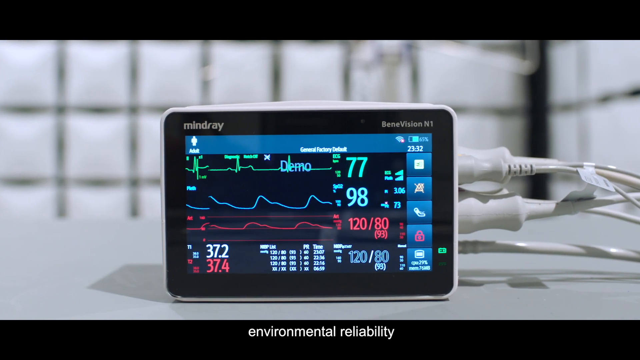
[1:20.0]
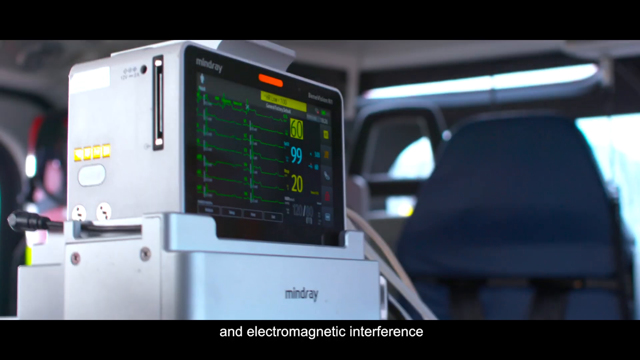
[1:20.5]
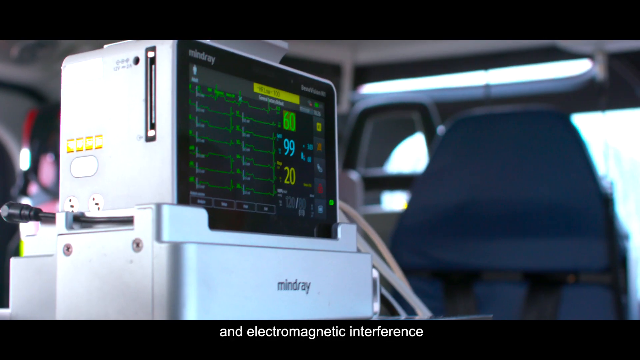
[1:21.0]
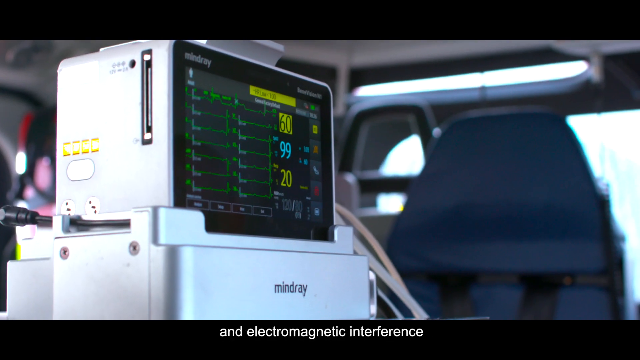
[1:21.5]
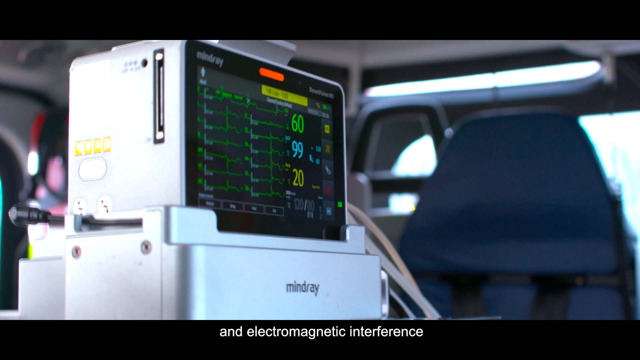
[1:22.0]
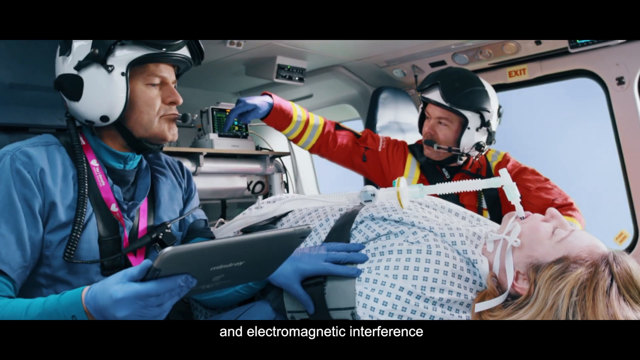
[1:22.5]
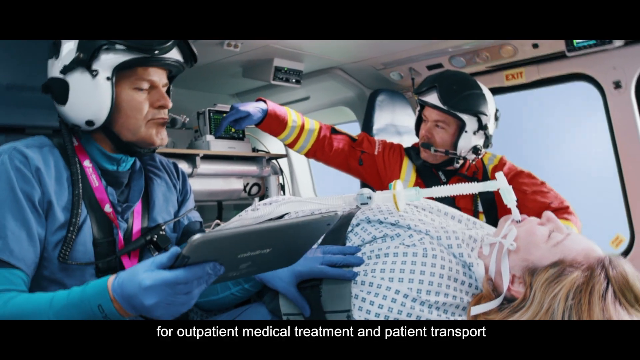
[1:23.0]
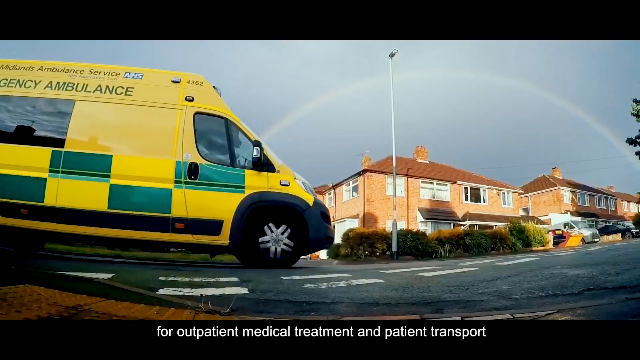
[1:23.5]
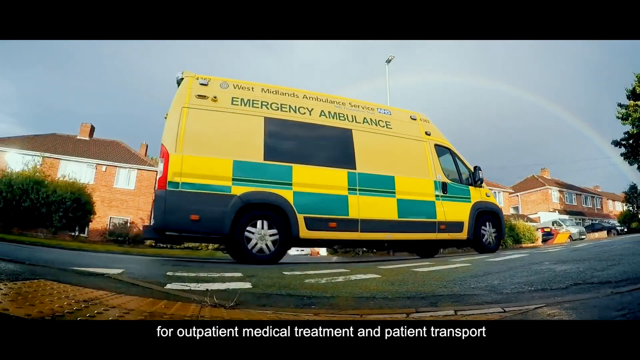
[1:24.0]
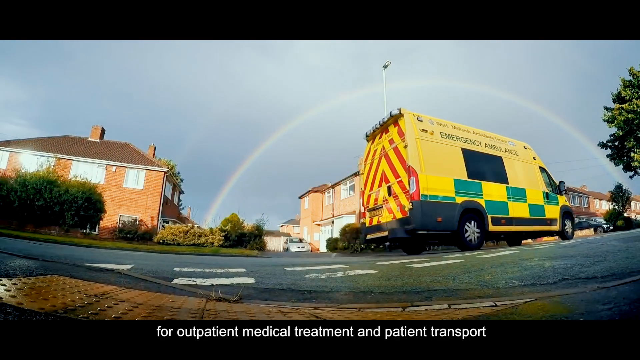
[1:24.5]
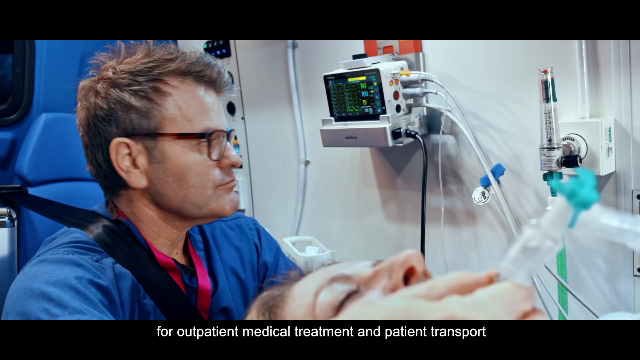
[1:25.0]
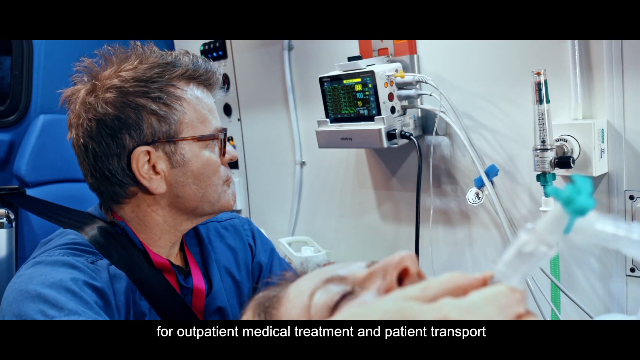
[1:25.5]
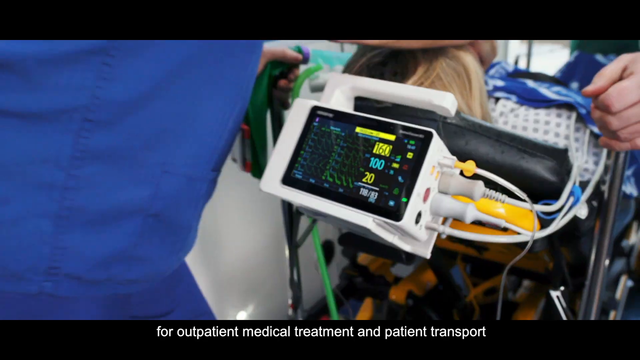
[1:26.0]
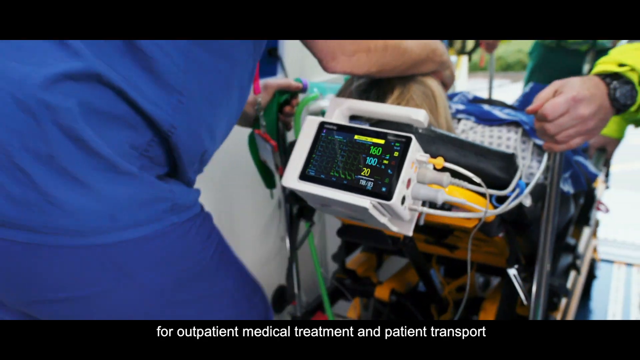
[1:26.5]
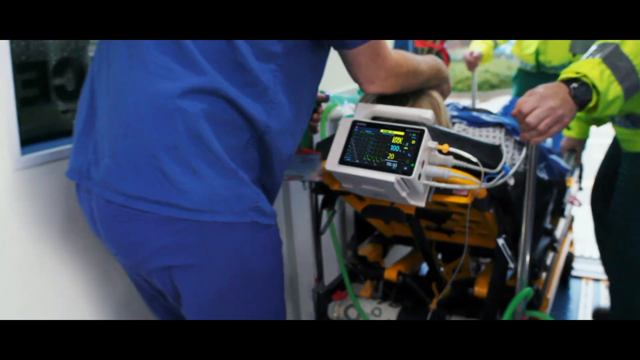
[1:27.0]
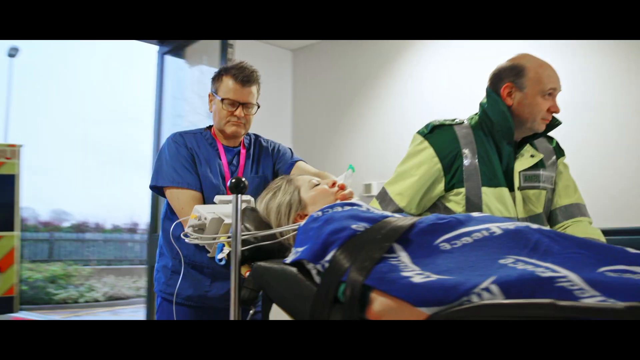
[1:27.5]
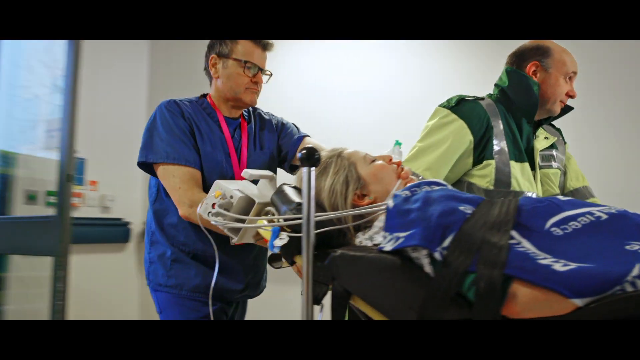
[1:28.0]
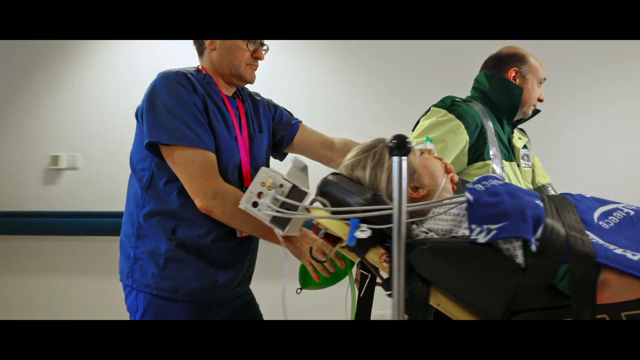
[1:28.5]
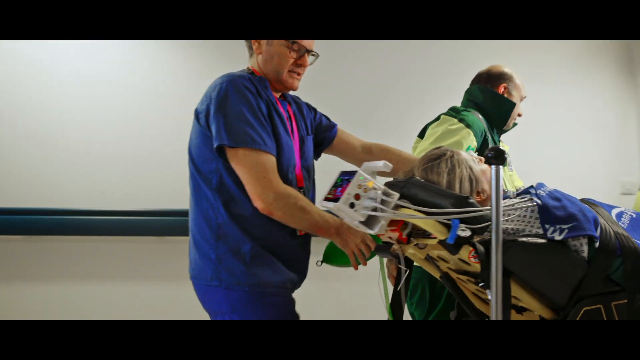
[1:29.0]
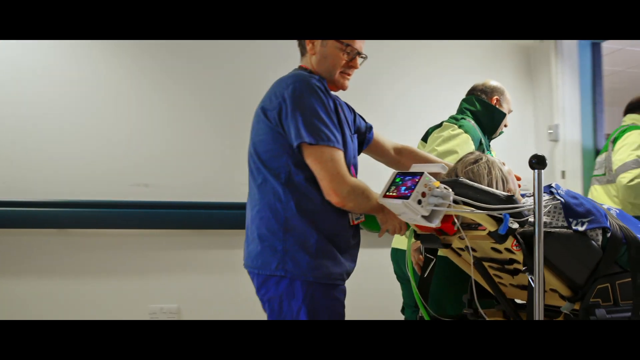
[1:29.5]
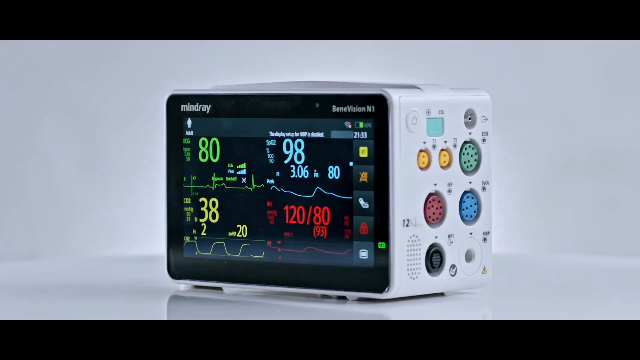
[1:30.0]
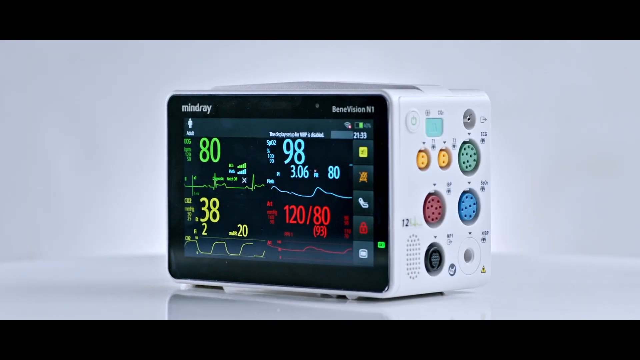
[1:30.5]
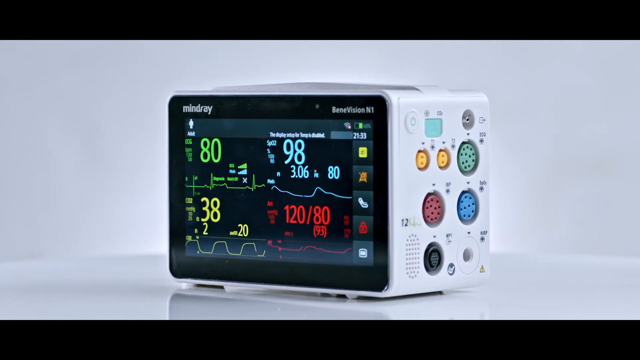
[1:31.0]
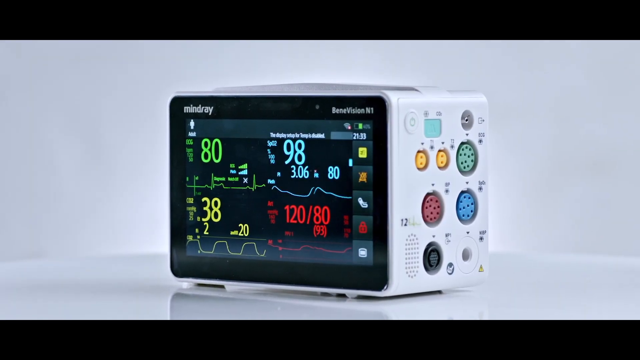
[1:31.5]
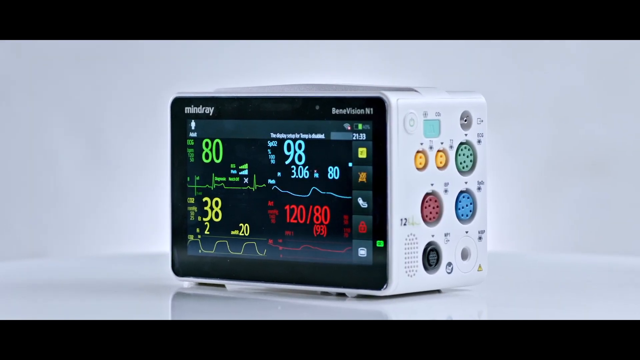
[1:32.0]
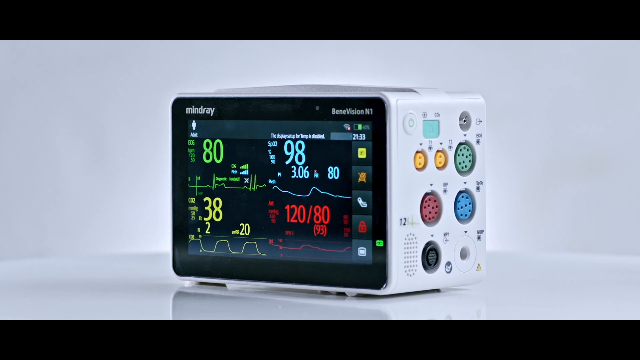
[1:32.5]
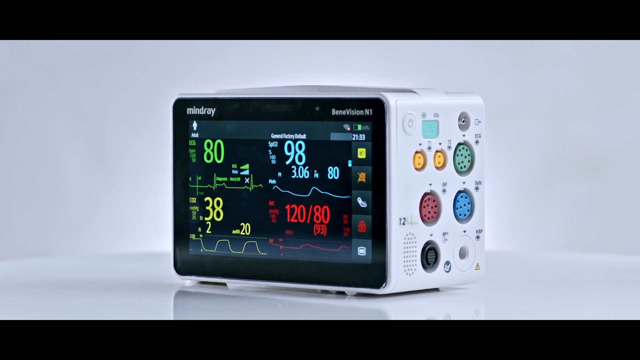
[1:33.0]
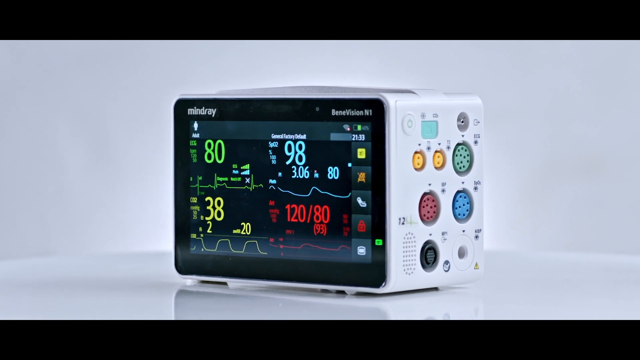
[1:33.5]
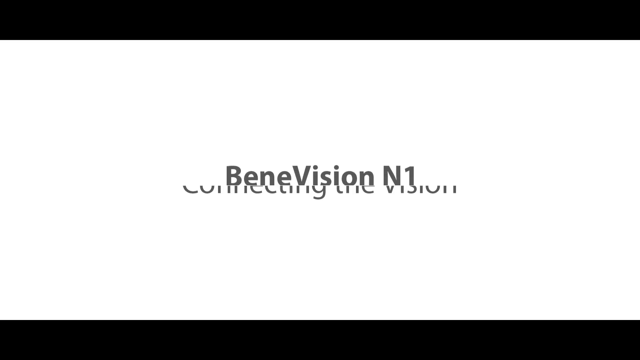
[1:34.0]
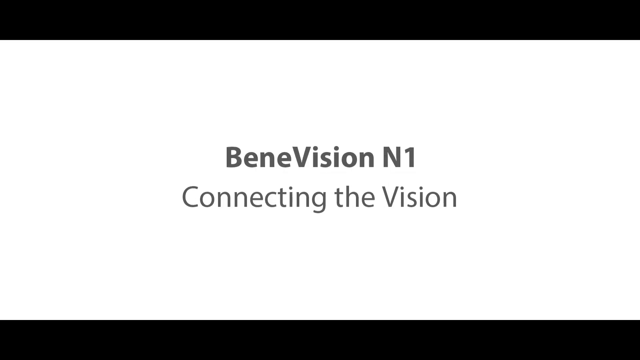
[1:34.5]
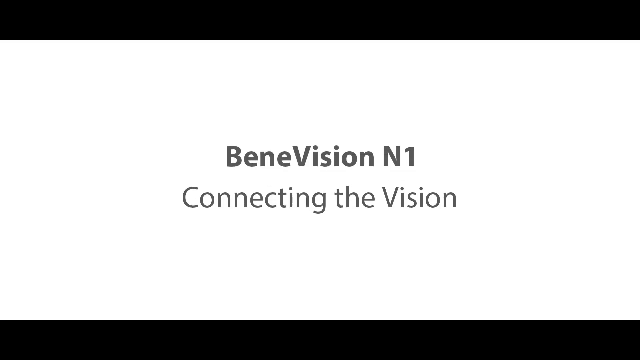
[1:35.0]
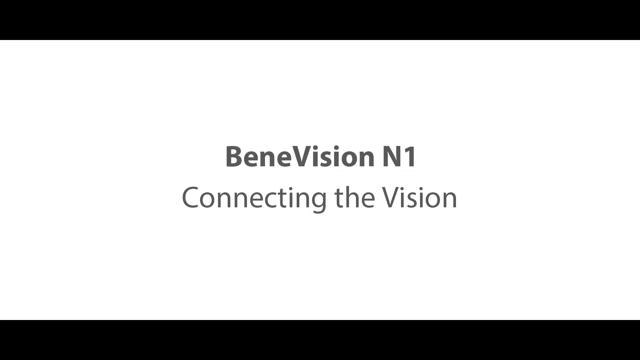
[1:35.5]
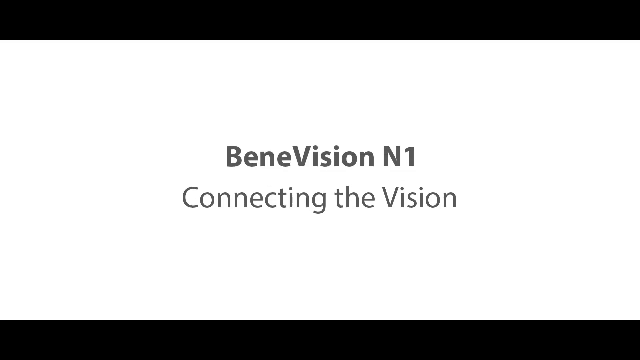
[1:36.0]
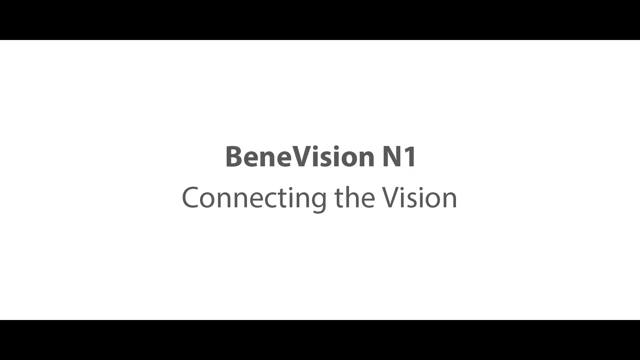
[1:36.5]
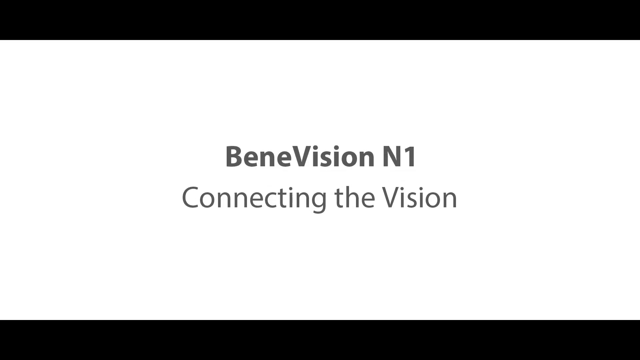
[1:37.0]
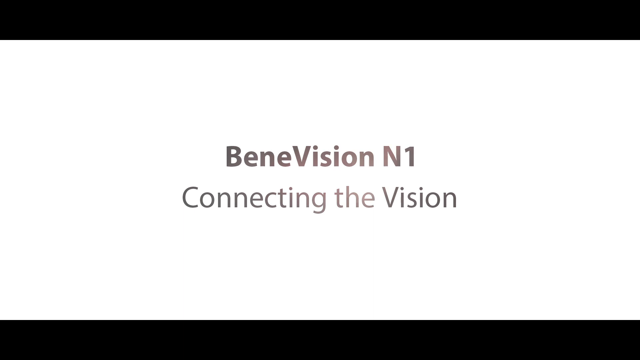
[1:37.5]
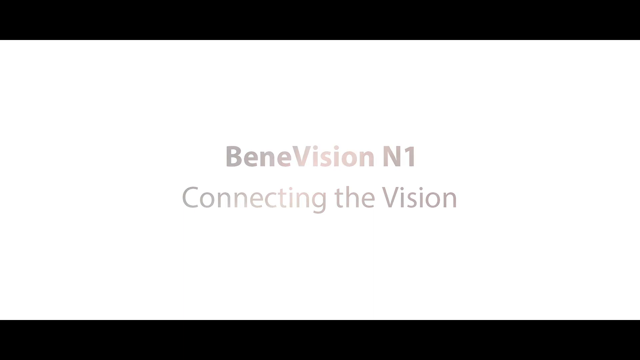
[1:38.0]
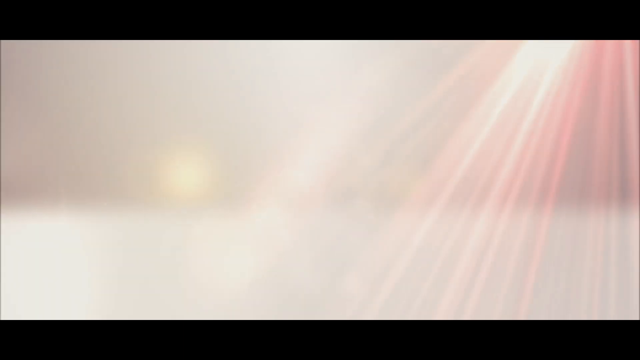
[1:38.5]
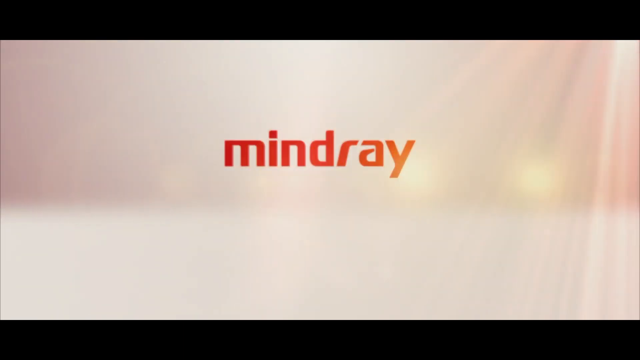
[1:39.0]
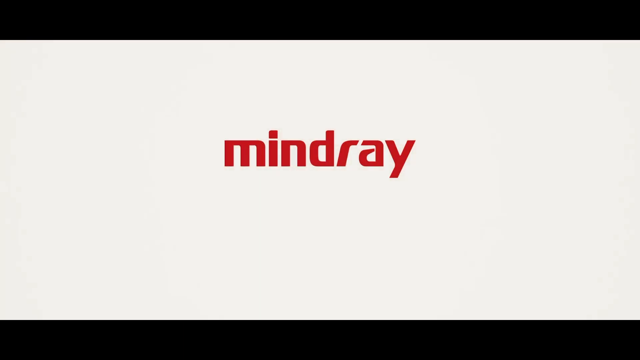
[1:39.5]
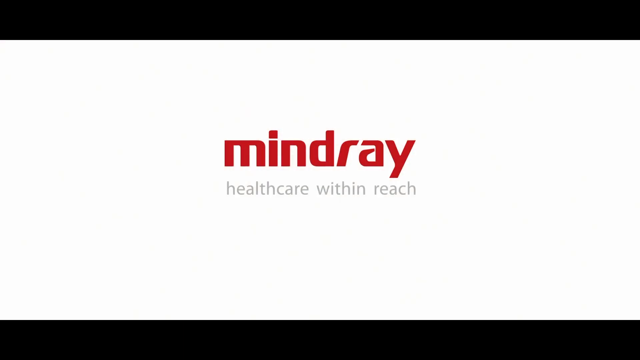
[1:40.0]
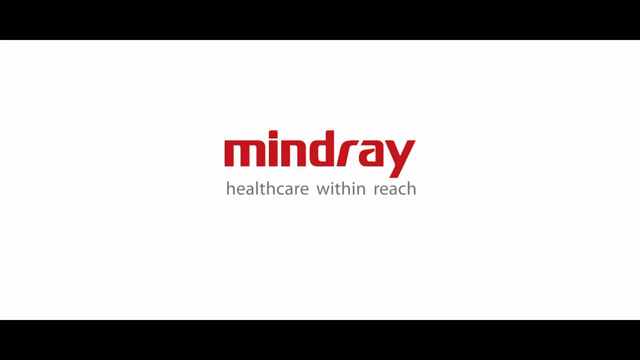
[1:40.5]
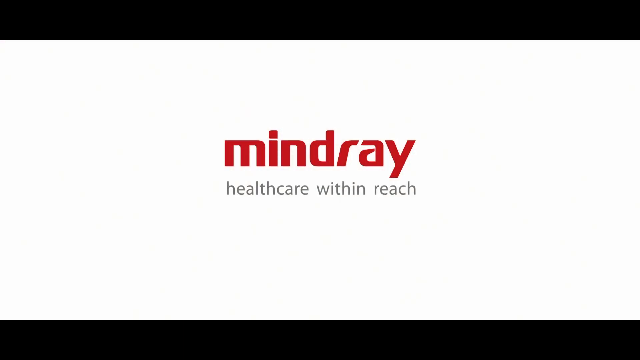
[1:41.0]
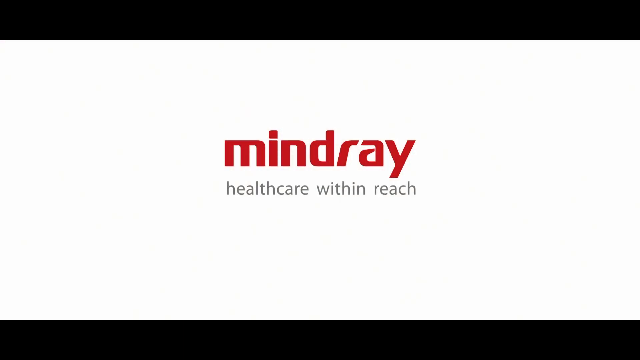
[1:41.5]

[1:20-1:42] The machine rides along in an ambulance. The scene also looks kind of like a plane, as the people are wearing big helmets and have microphones, apparently showing it can be taken in helicopters as well as ambulances and other vehicles. A patient is lying on a bed and is taken in. Two men wear something sort of neon green, and a man in the back wears a dark blue, kind of nurse-style smock. The company logo "BeneVision N1" is then shown again with "connecting the vision" right below it. At the end, the company that apparently made it, Mindray, appears with the text "health care within reach."